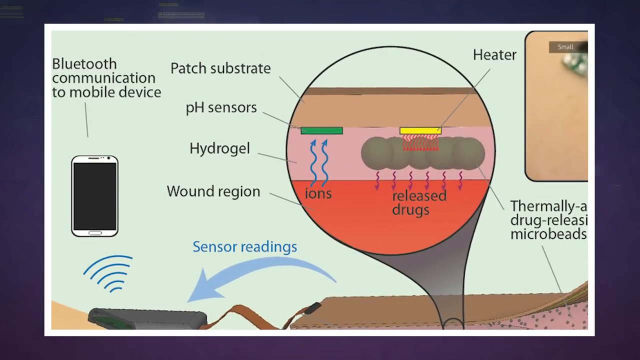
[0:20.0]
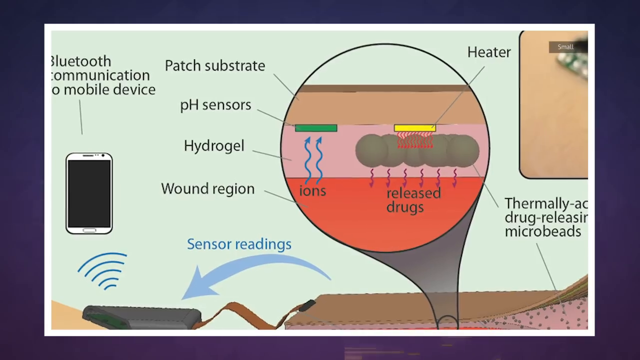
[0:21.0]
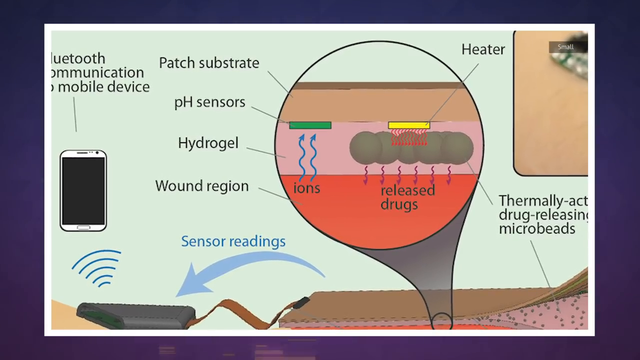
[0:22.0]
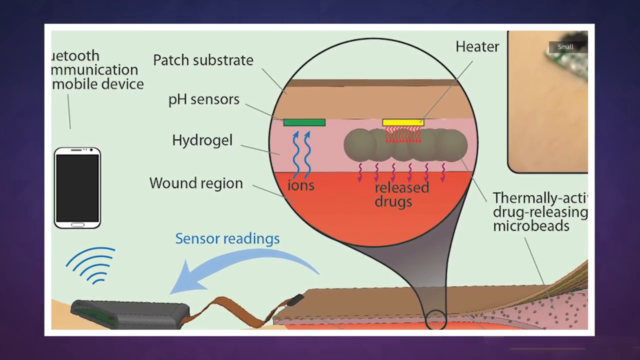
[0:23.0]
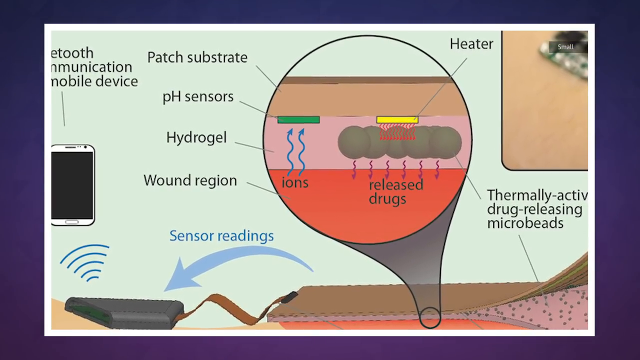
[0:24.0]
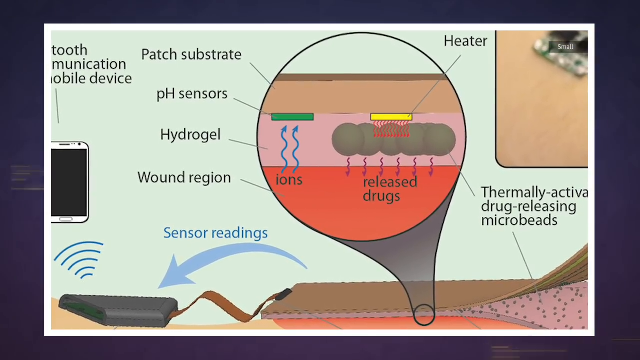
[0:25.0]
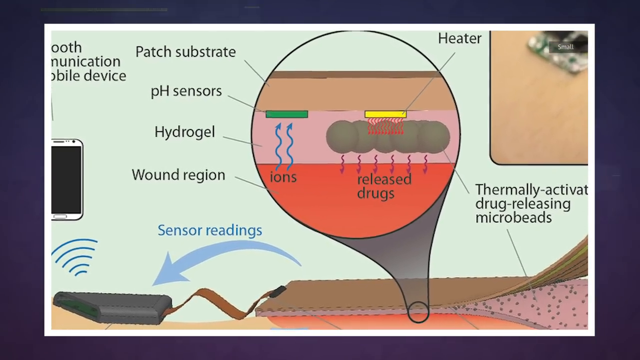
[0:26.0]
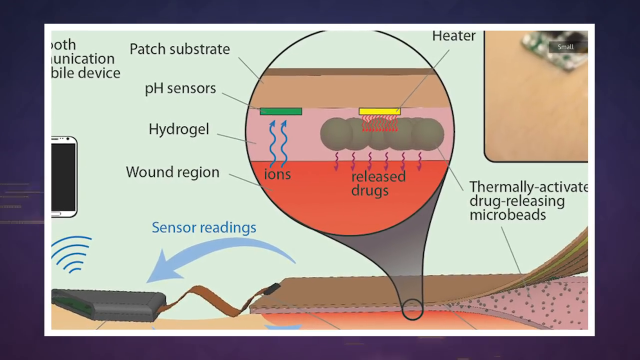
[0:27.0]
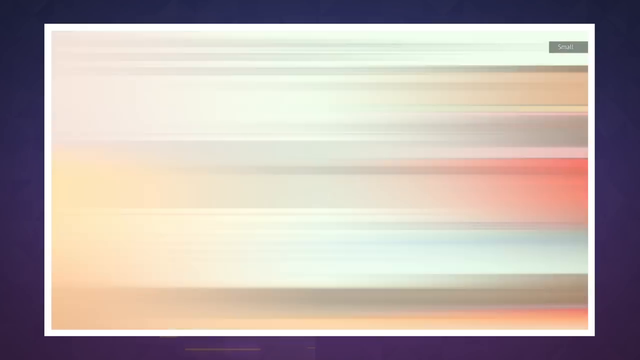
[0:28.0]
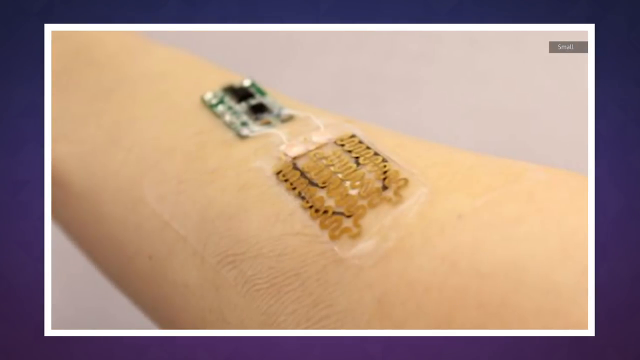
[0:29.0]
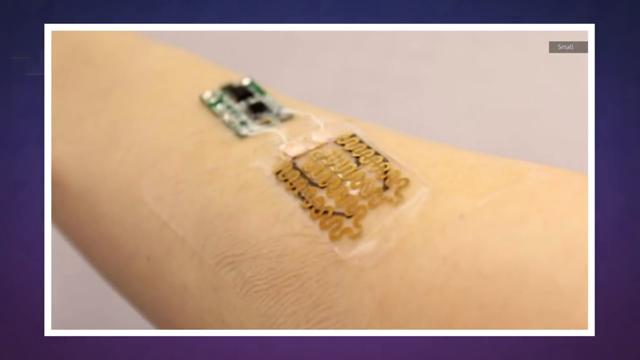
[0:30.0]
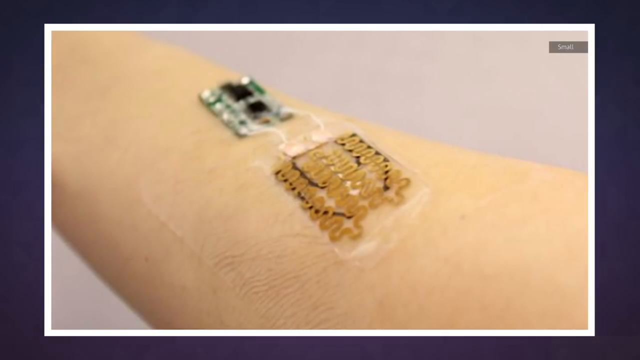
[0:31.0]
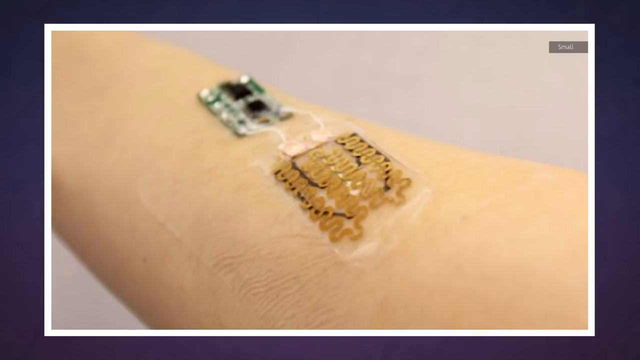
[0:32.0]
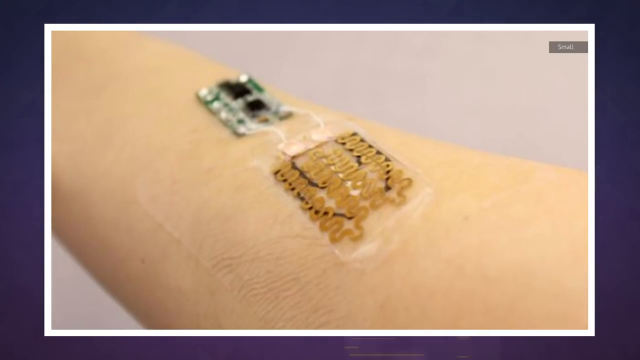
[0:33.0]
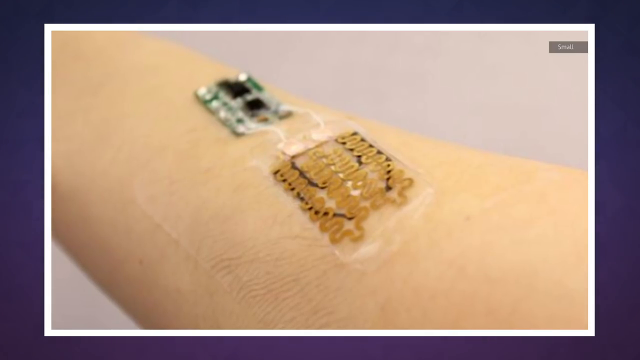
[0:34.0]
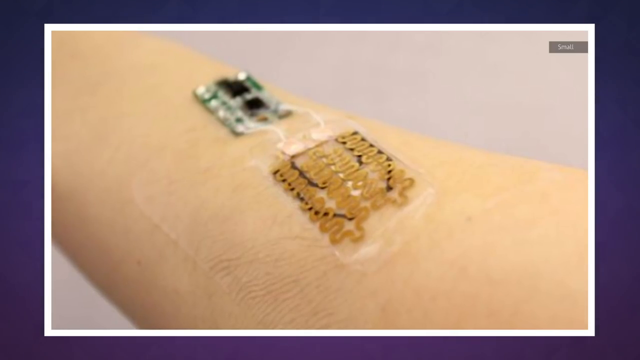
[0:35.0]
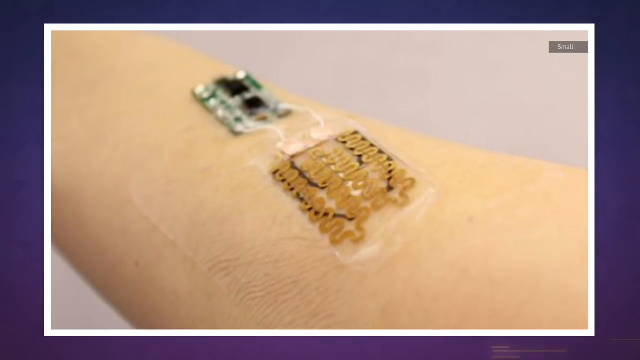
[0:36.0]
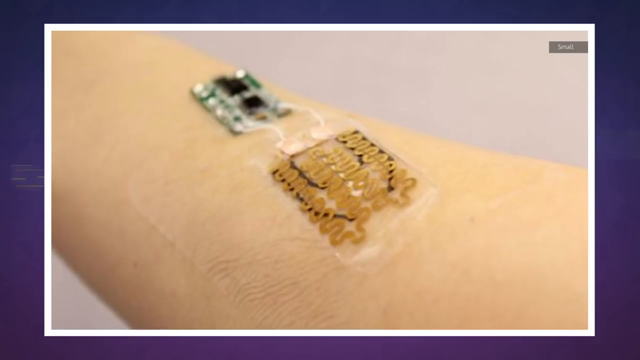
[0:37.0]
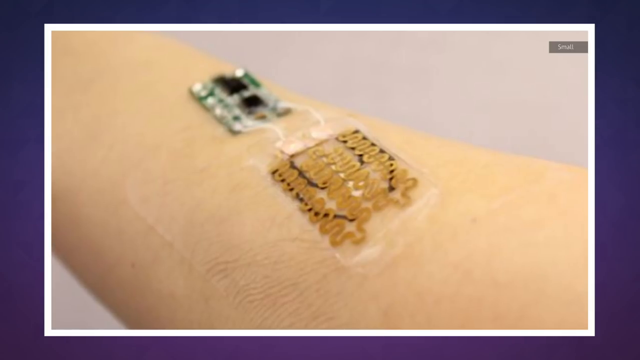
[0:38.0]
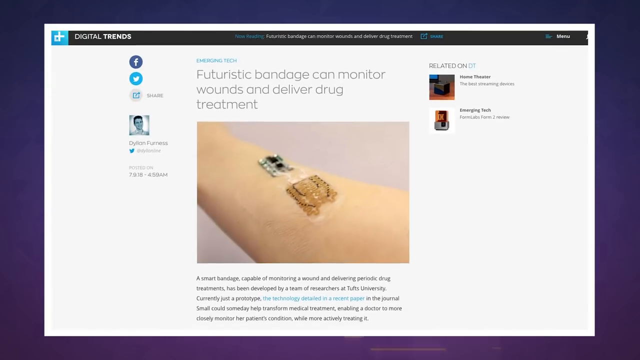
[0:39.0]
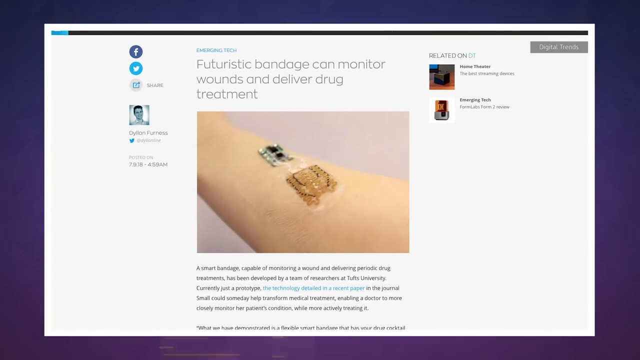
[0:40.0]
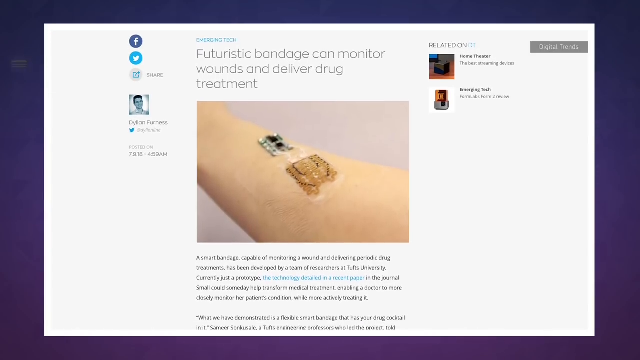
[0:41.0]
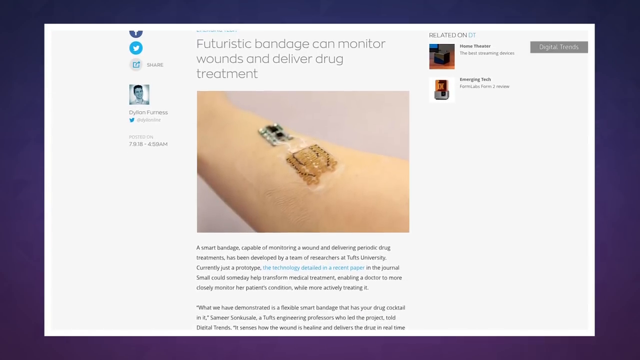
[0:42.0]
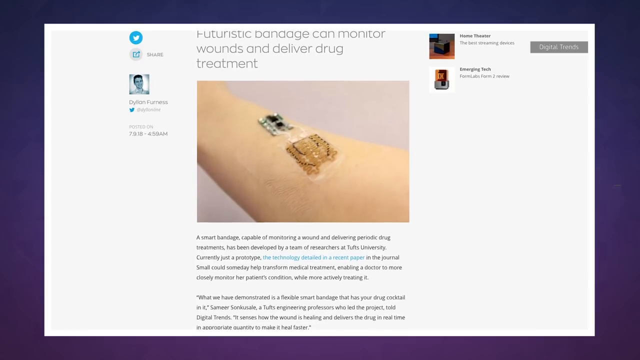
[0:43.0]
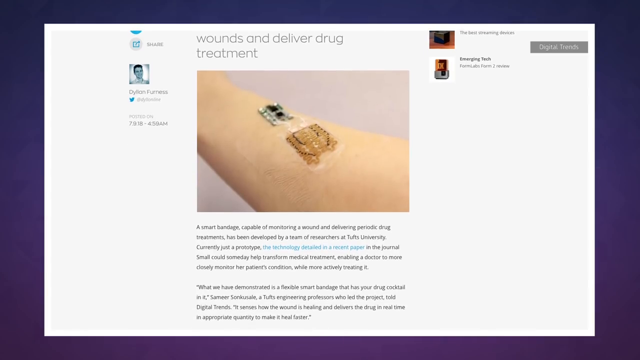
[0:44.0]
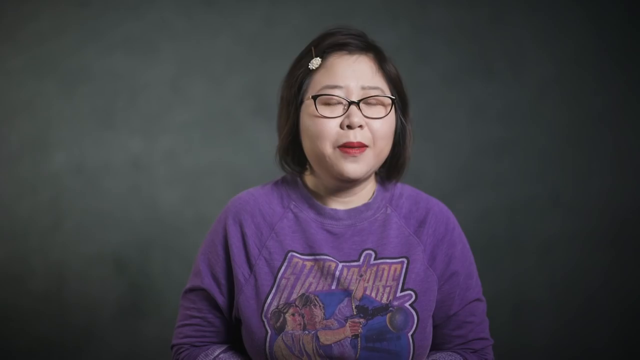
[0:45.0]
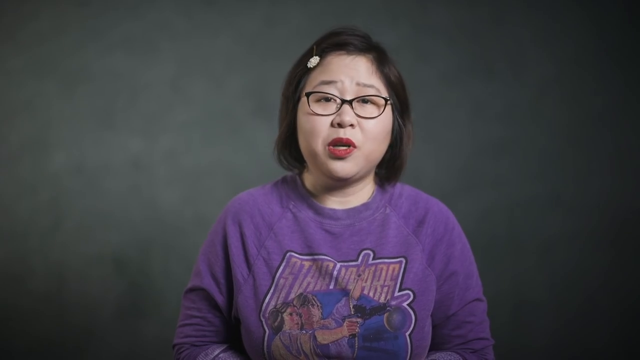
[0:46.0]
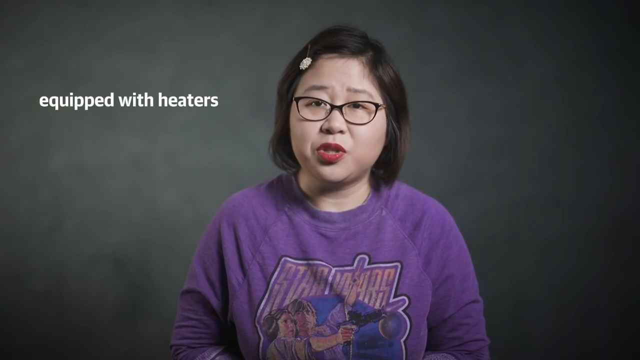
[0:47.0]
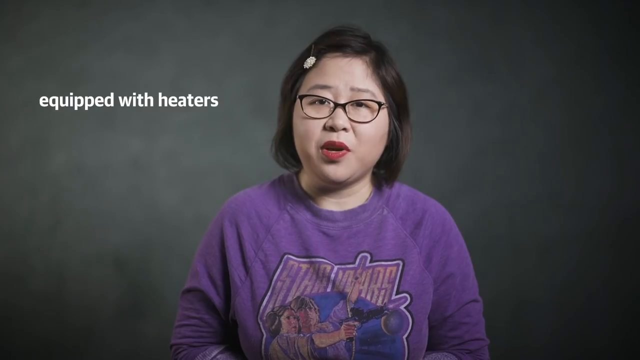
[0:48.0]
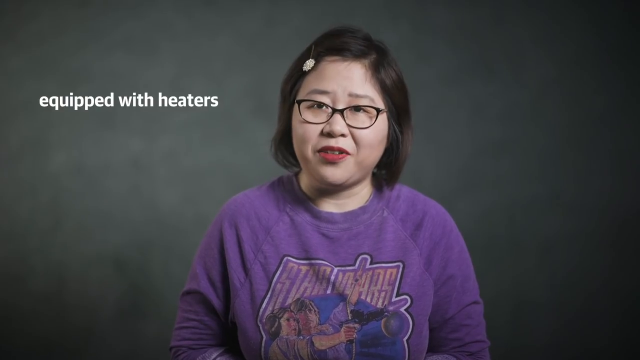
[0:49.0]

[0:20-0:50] A graphic with a light blue background shows the parts of the smart bandage and how it works, listing "Bluetooth communication or mobile device, patch substrate, pH sensors, hydrogel, wound region sensor readings, heater." An image of the bandage follows: a gold, coily thing with what looks like a computer chip on the end, with white adhesive on a person's skin and a clear patch holding it down. The shot lingers on this for quite a while. Next comes an image of what looks like an article about the bandage, with text reading "futuristic bandage can monitor wounds and deliver drug treatment," and the camera pans across the article. The video then goes to an Asian woman in center frame, wearing a purple shirt, dark glasses and bright, reddish lipstick. She is speaking, and text coming up to her left reads "equipped with heaters" before the shot cuts out.